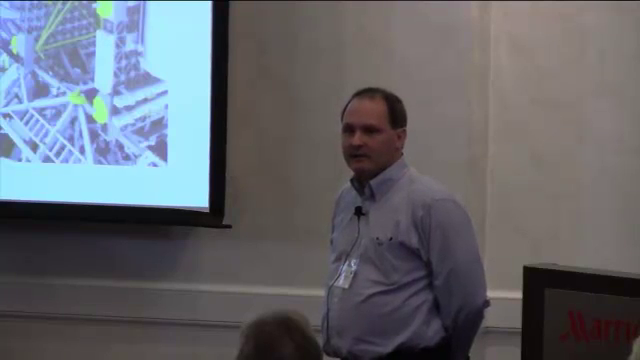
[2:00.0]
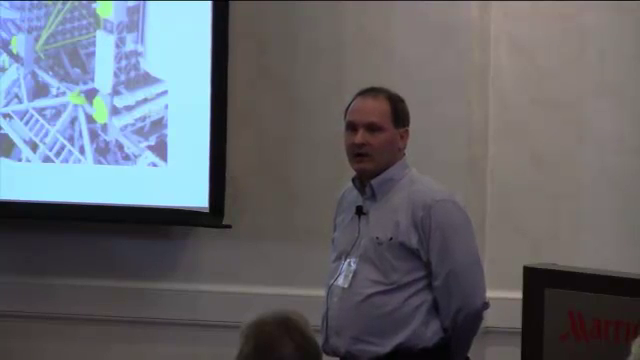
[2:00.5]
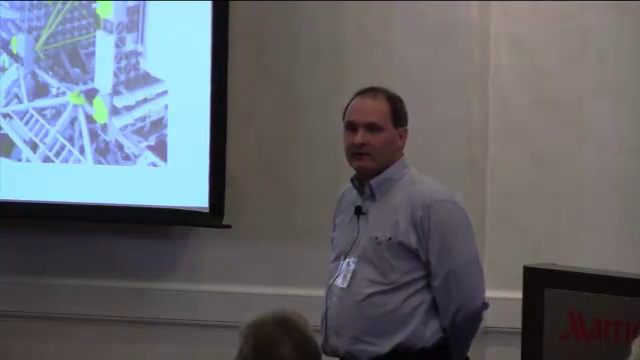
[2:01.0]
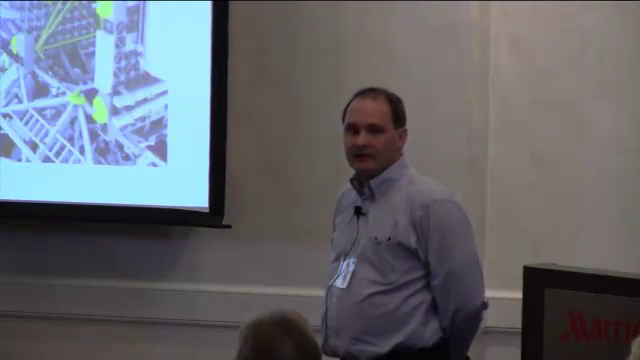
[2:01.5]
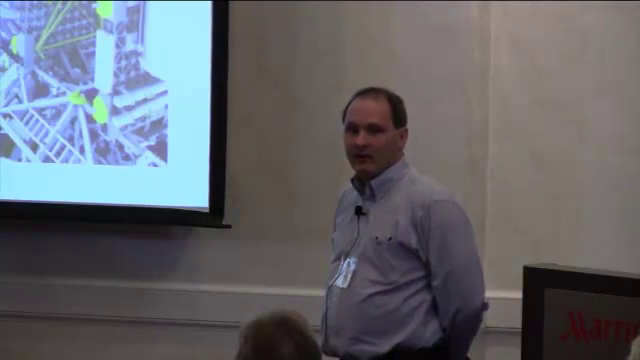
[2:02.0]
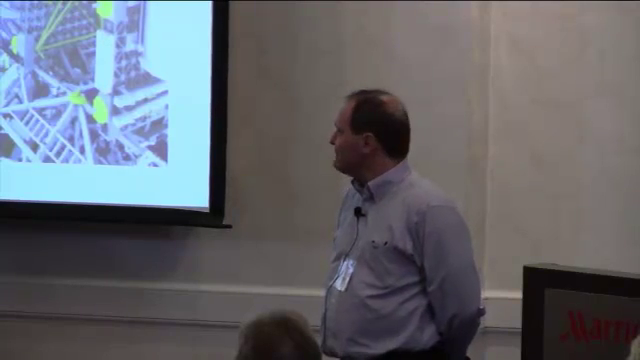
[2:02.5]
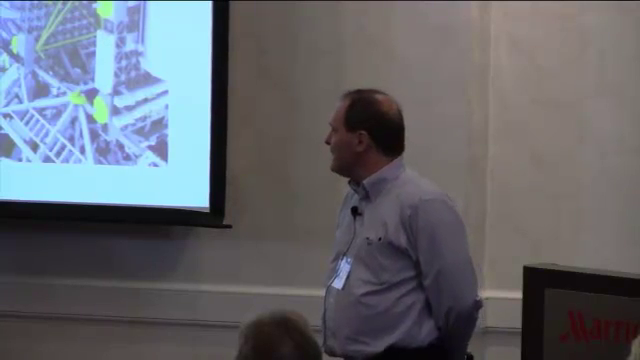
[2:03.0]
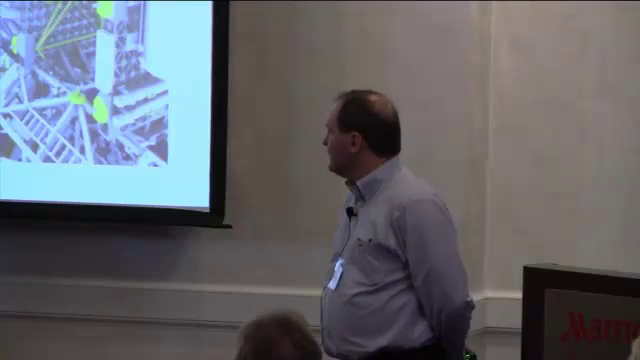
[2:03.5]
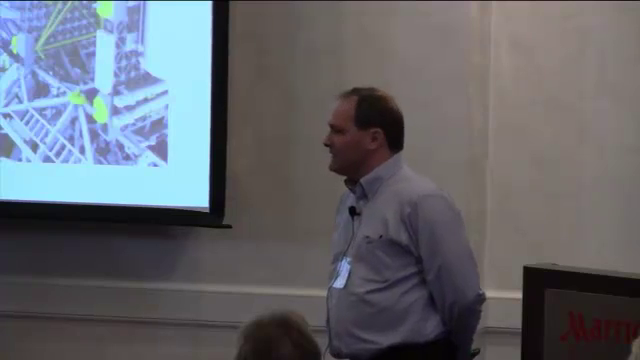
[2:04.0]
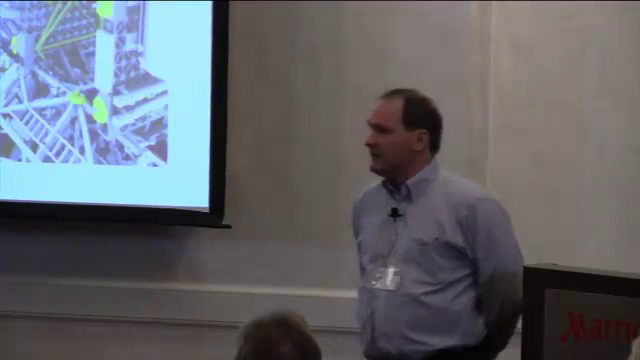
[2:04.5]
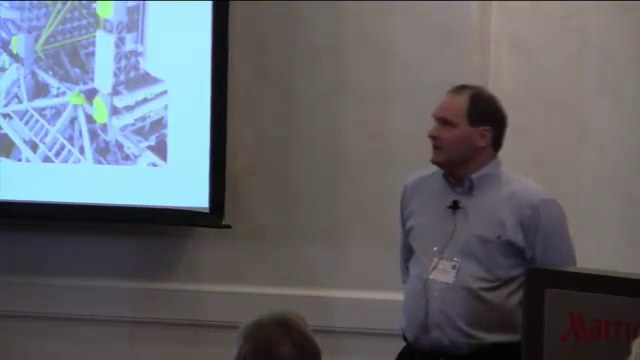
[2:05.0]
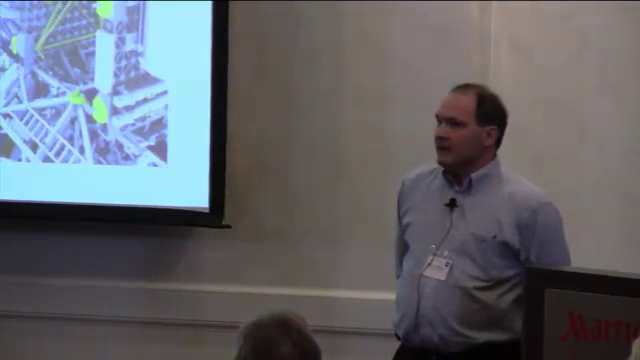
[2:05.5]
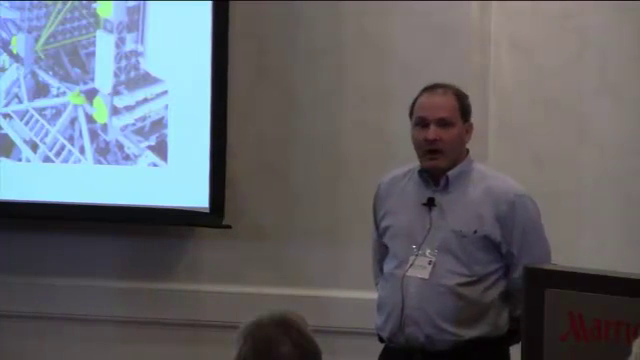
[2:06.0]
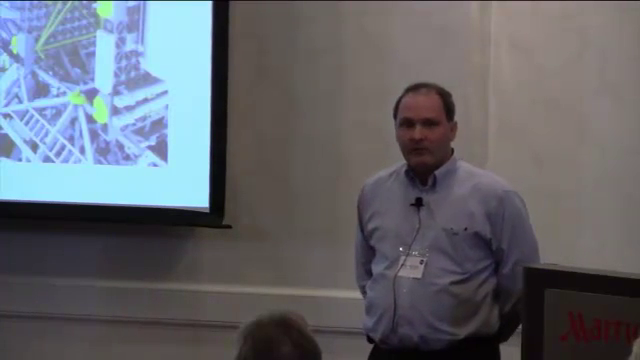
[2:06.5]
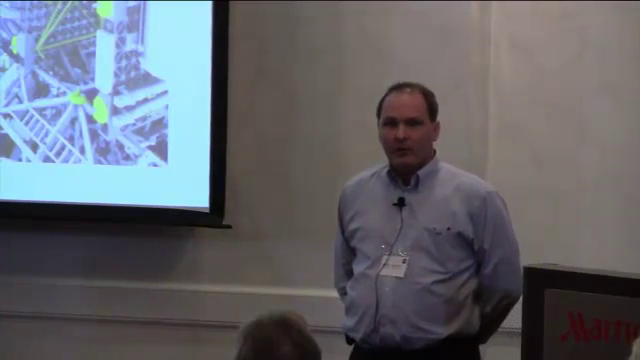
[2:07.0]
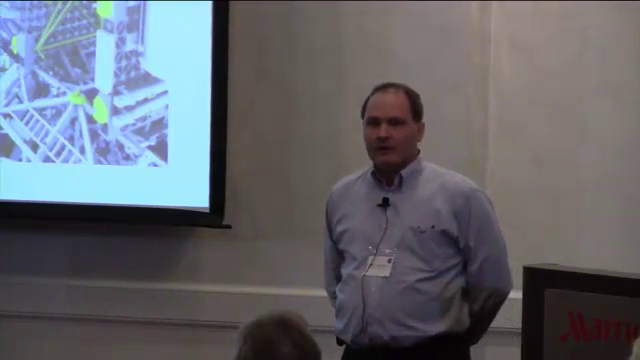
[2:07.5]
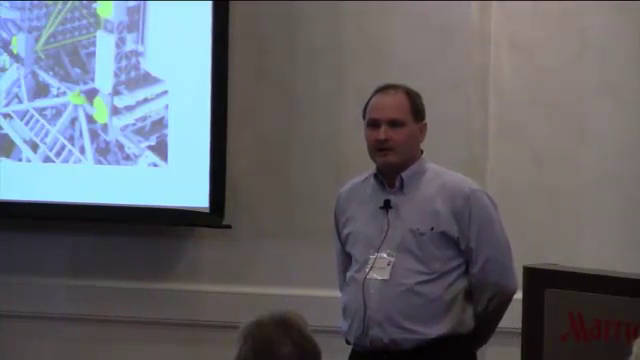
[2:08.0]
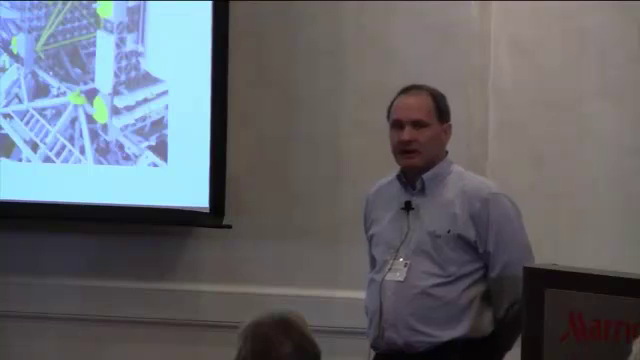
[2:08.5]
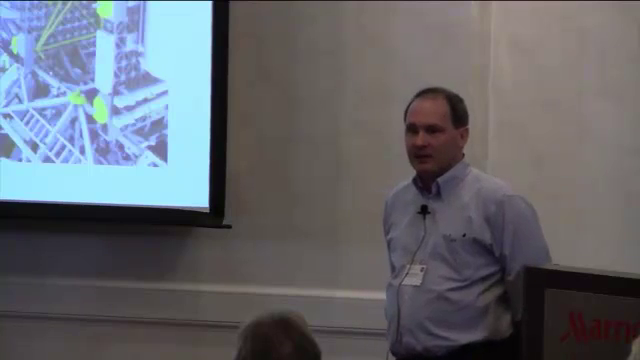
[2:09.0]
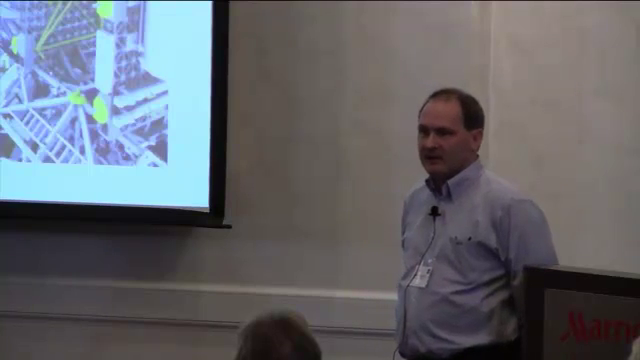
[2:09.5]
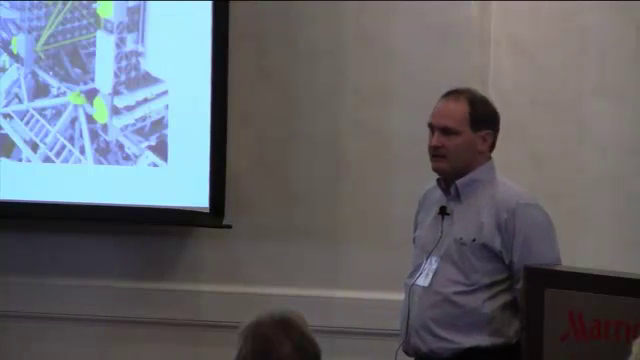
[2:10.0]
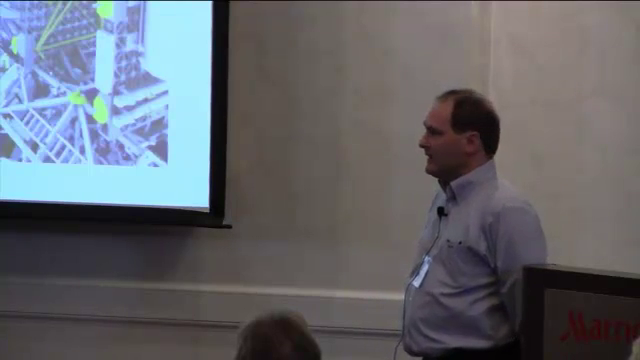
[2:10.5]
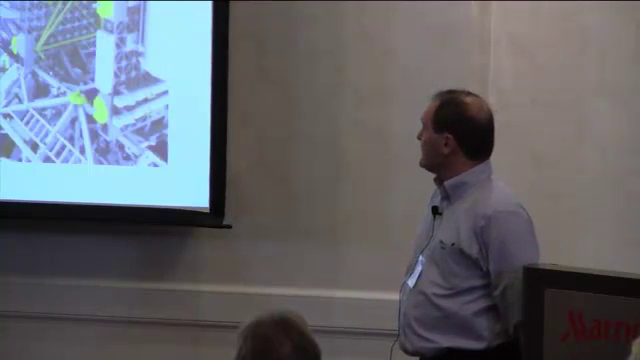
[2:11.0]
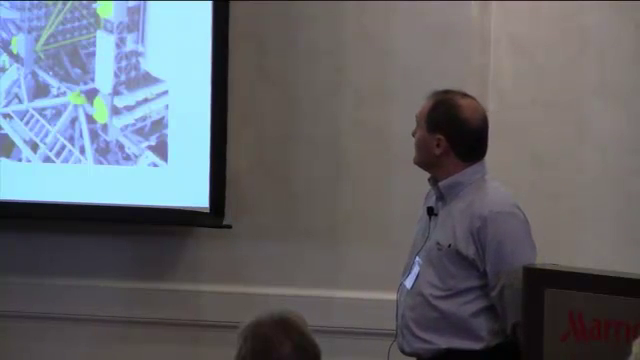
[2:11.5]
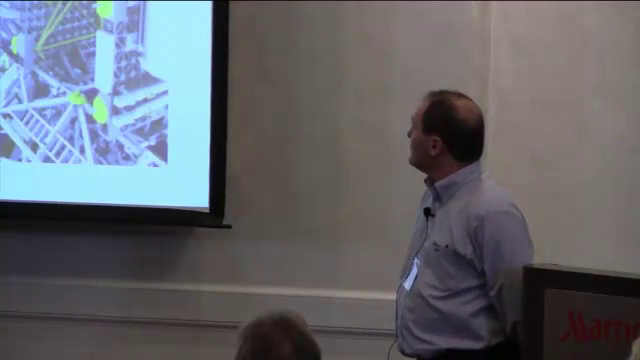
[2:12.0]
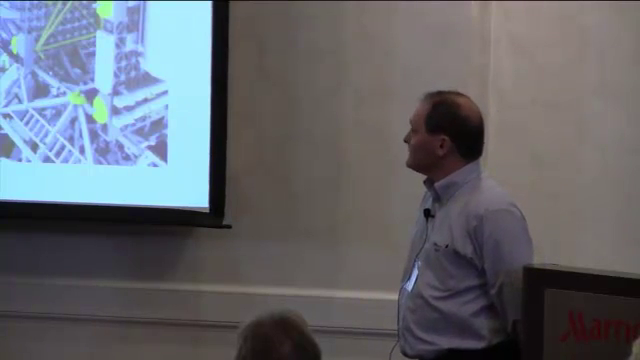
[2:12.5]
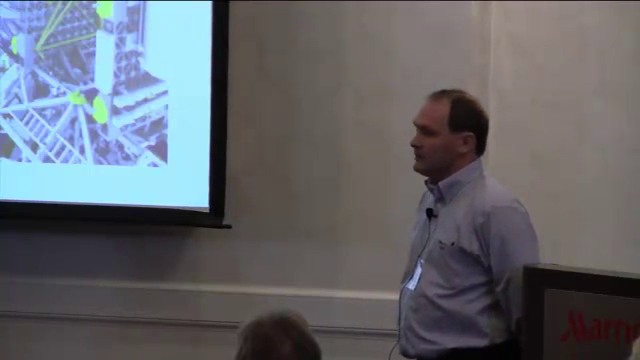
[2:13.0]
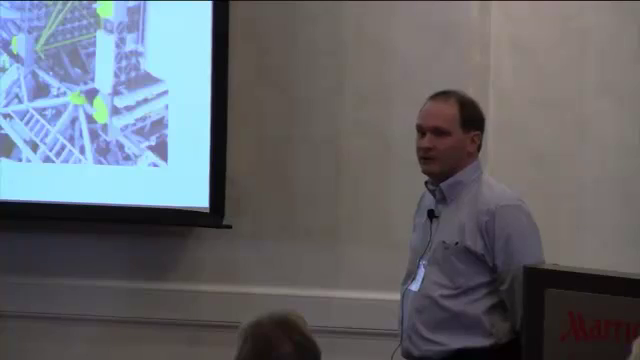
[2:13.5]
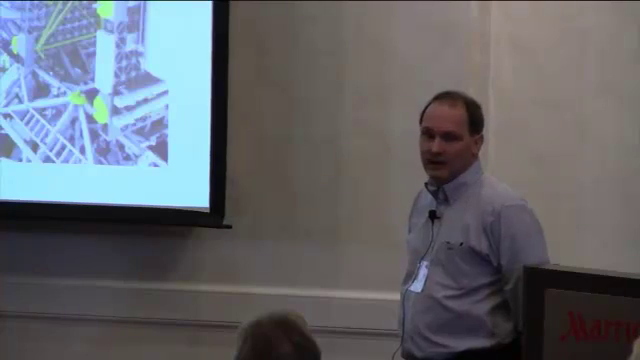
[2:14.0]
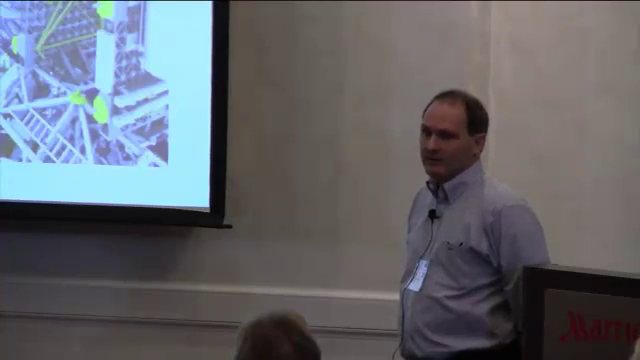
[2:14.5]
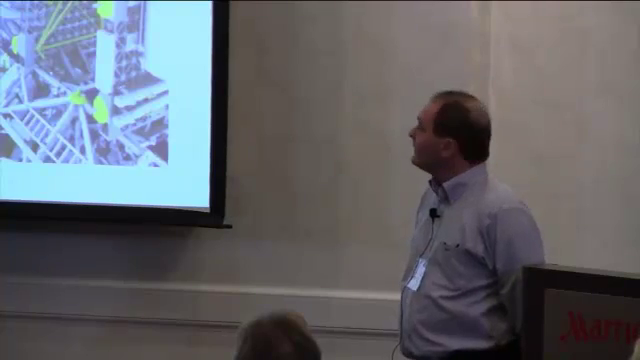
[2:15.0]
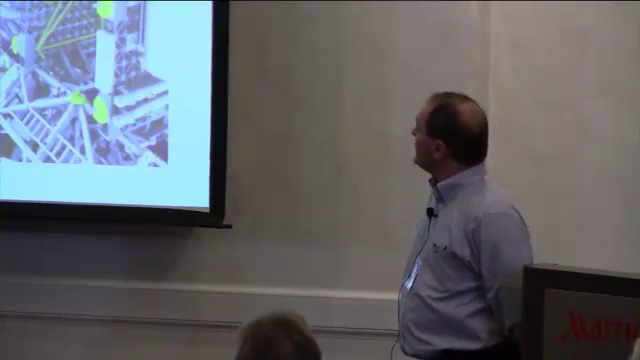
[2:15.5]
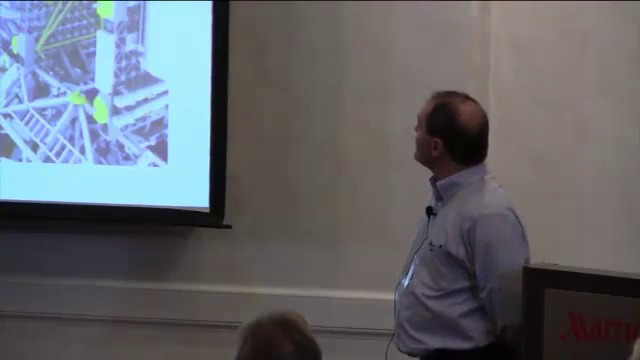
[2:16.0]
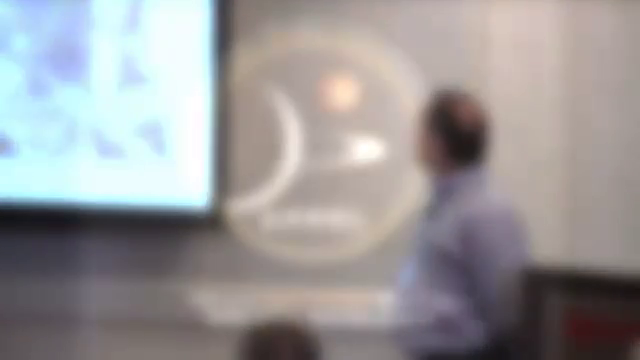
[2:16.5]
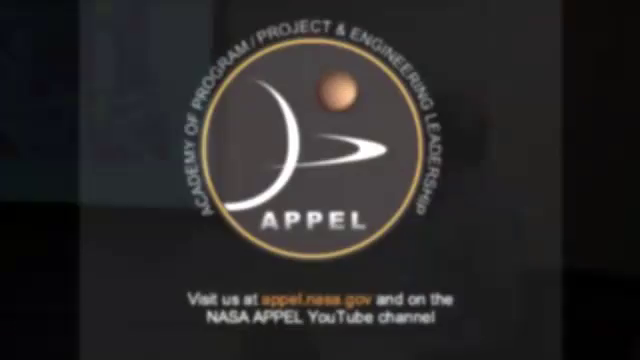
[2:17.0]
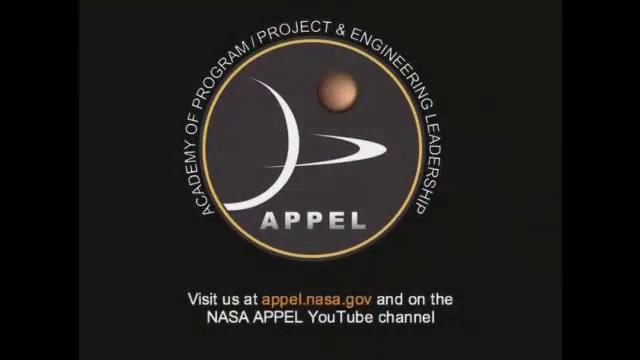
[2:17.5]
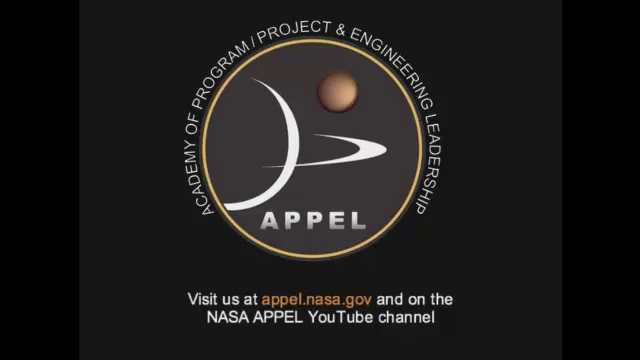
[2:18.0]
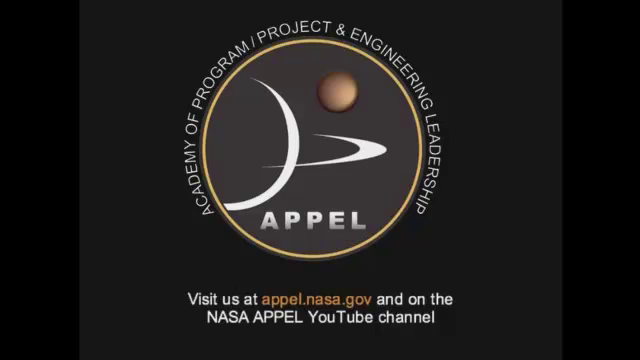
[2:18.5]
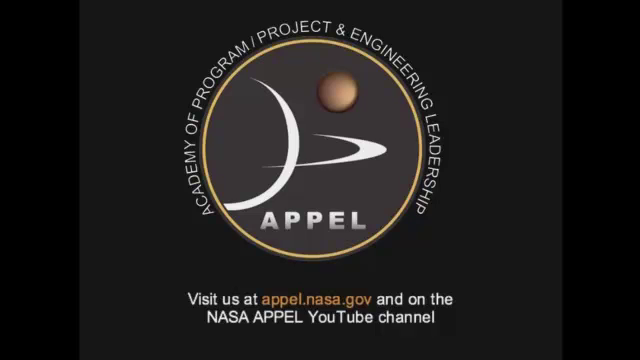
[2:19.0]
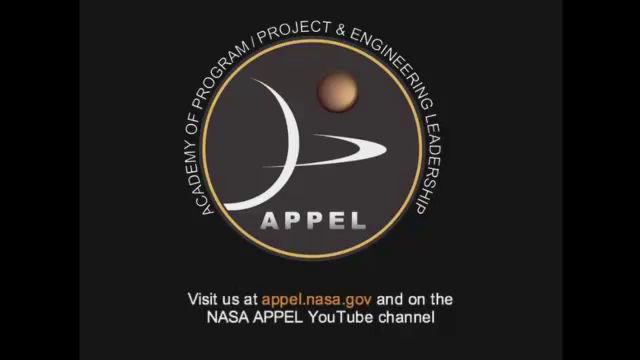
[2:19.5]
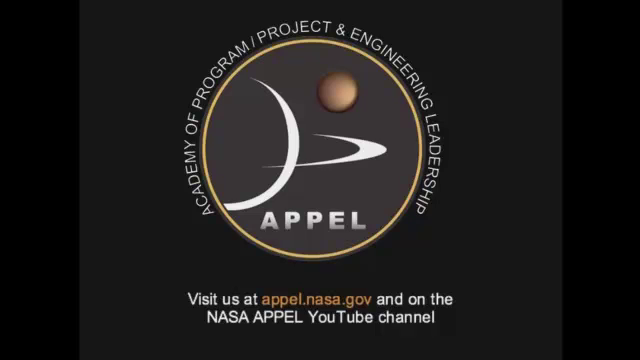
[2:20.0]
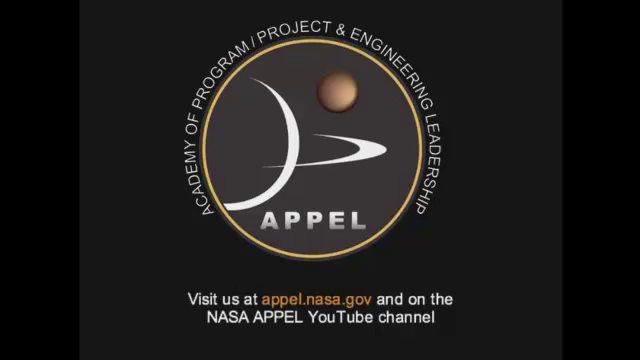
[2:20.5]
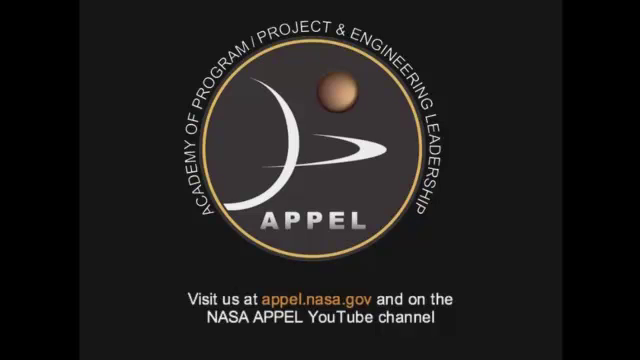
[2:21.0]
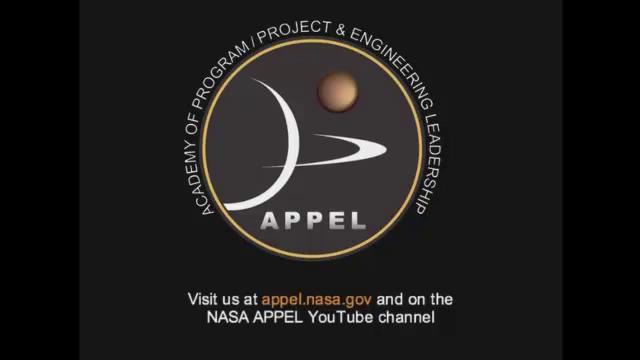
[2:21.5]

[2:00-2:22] The gentleman continues speaking to his audience, standing to the left of a wooden podium. He wears a light-colored collared button-down shirt with a microphone clipped between the second and third buttons, and a screen is to his right. His left arm is tucked behind his back, and a name badge rests on his round belly. He has a bald spot on top of his head and a receding hairline. He keeps looking back and forth between the audience and the screen to his right. The next page has a black background. In the center is a black circle outlined in gold. Inside it, at the top, is an orb or globe; to the left is a half circle with a ring around it shown as a curved line. Beneath that, white capital letters read "APPEL," and around the curve of the gold circle white text reads "Academy of Program, Project and Engineering Leadership." At the bottom of the screen it says "visit us at appel.nasa.gov. And on the NASA APPEL YouTube channel."